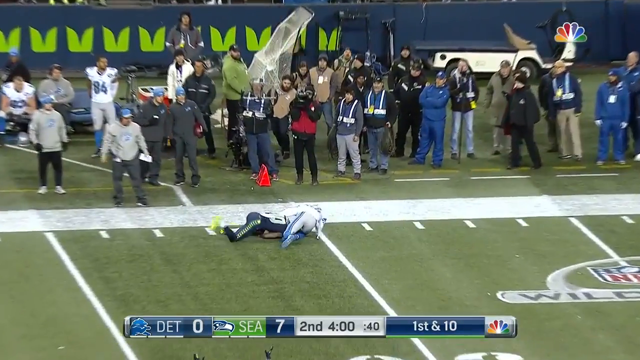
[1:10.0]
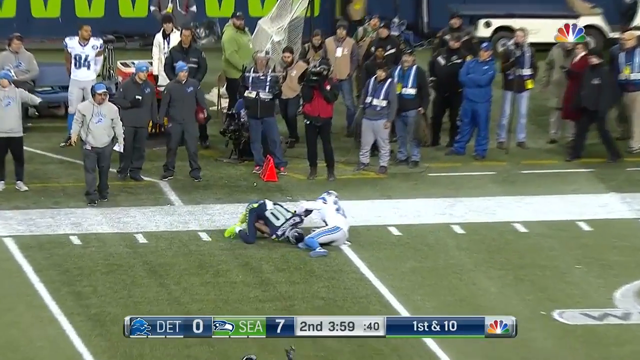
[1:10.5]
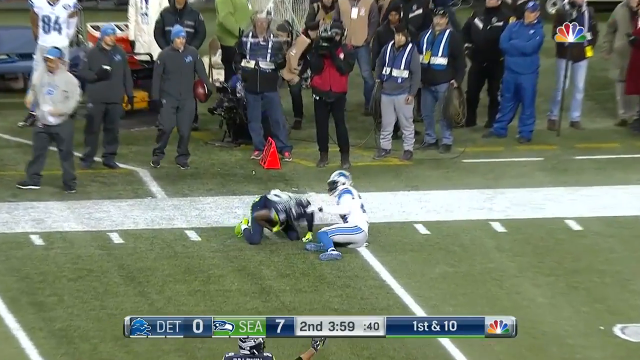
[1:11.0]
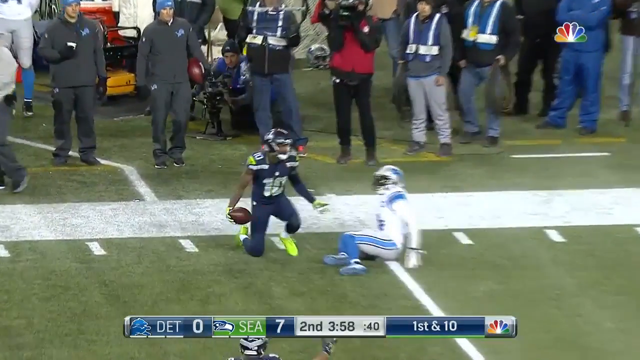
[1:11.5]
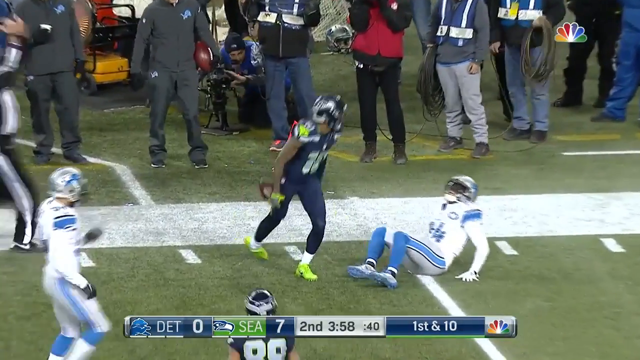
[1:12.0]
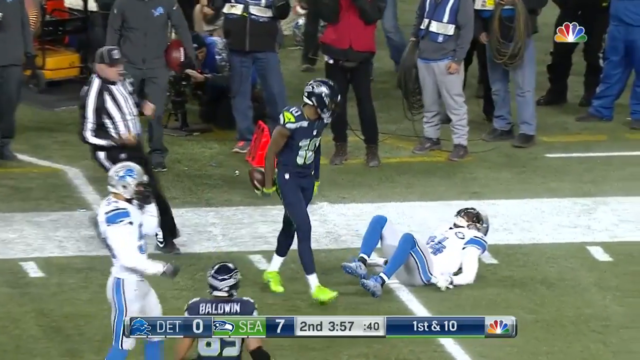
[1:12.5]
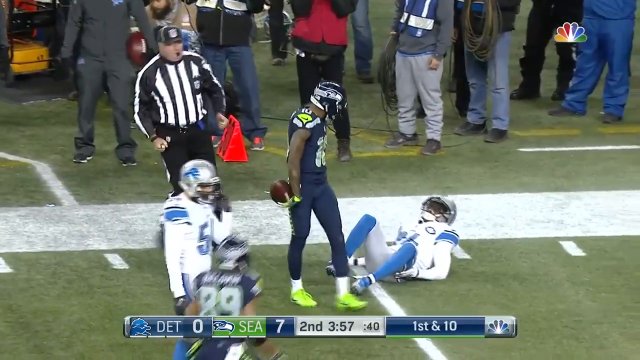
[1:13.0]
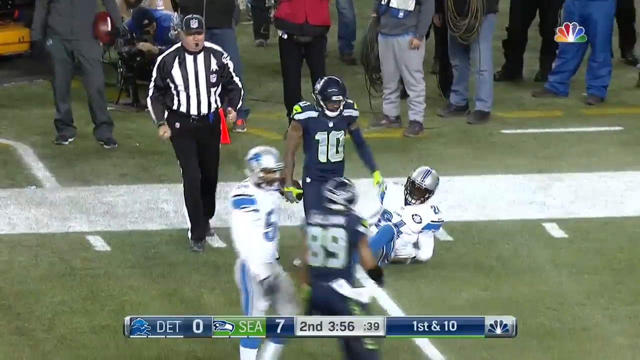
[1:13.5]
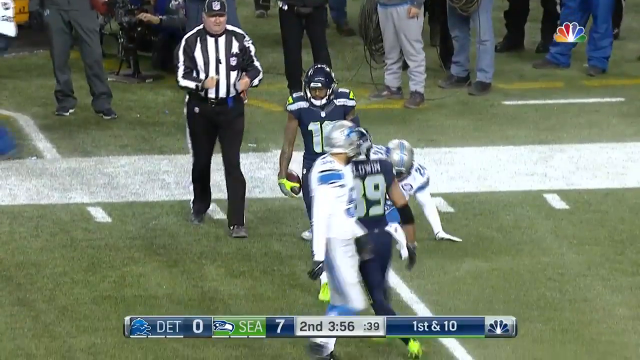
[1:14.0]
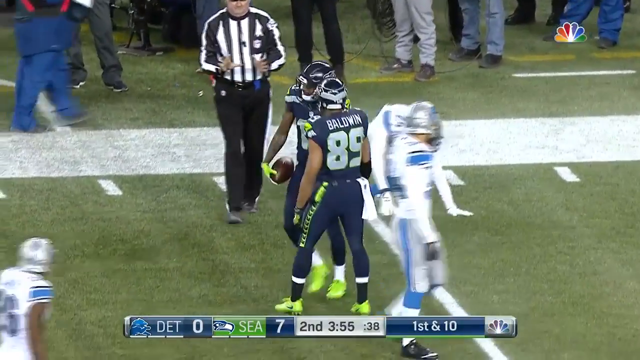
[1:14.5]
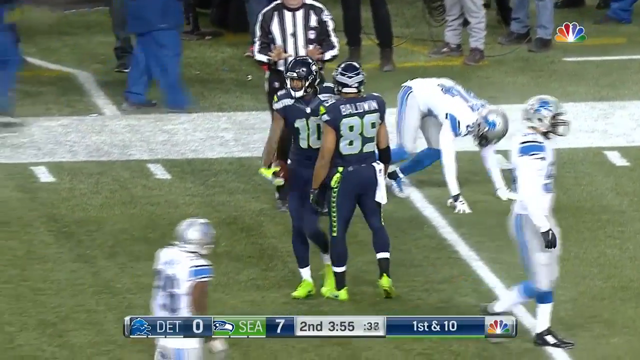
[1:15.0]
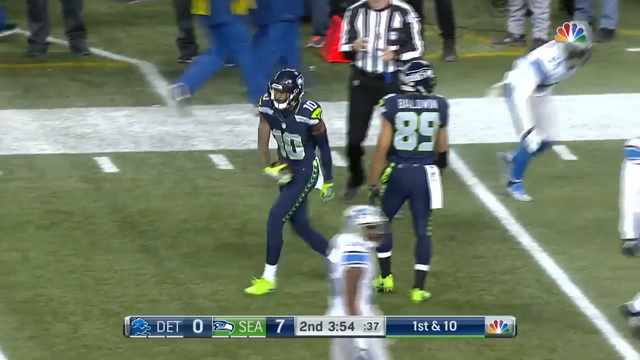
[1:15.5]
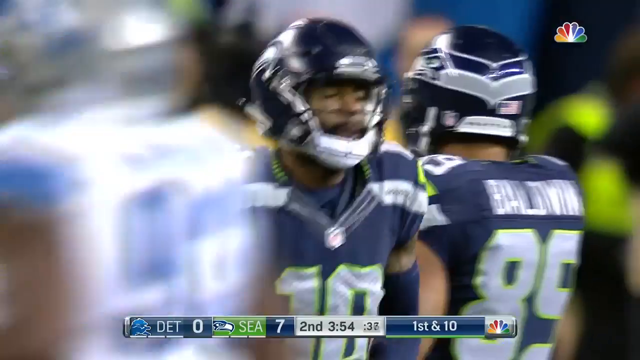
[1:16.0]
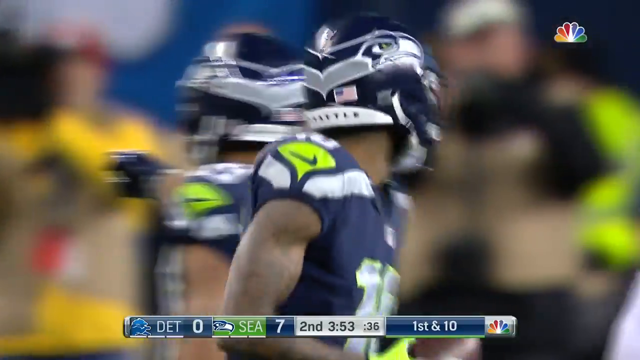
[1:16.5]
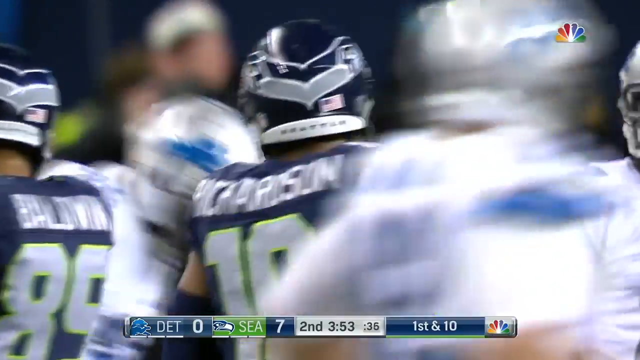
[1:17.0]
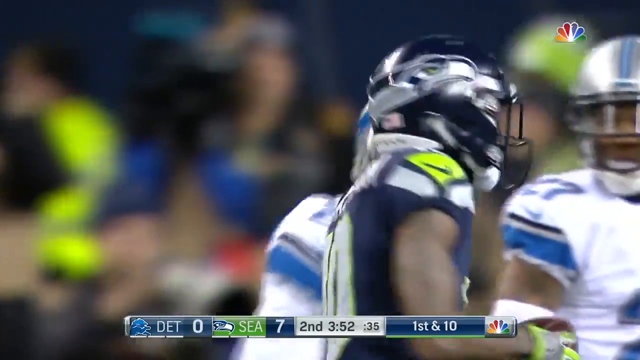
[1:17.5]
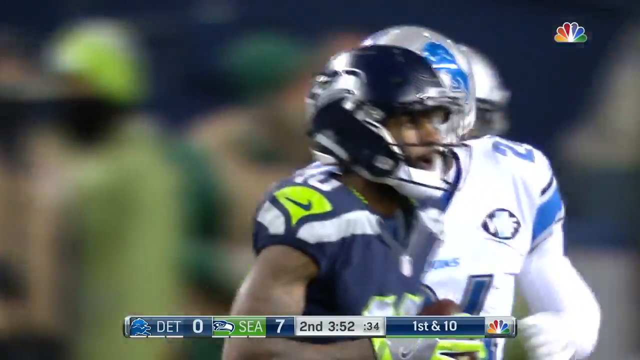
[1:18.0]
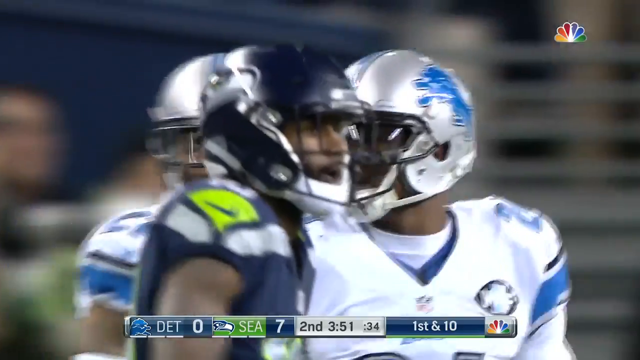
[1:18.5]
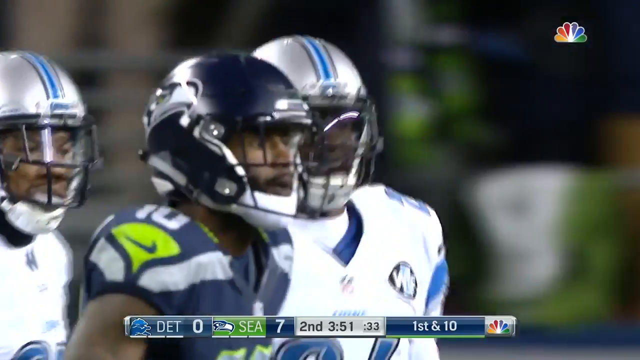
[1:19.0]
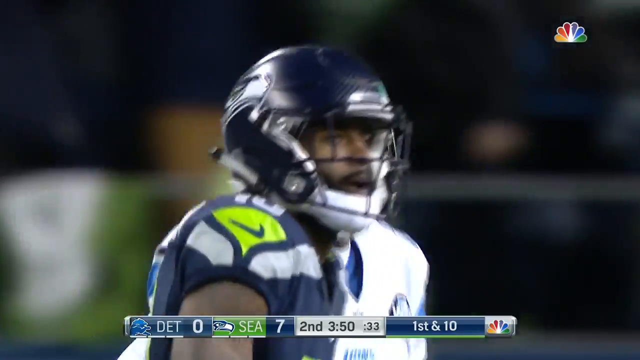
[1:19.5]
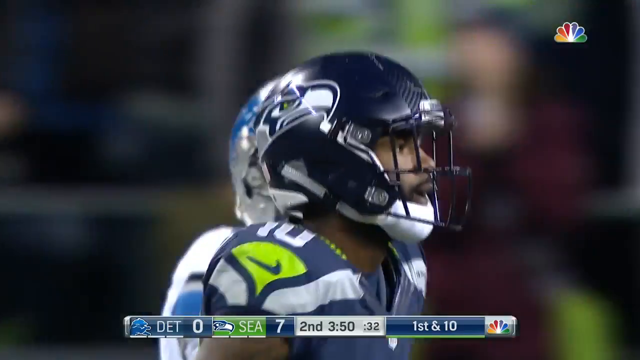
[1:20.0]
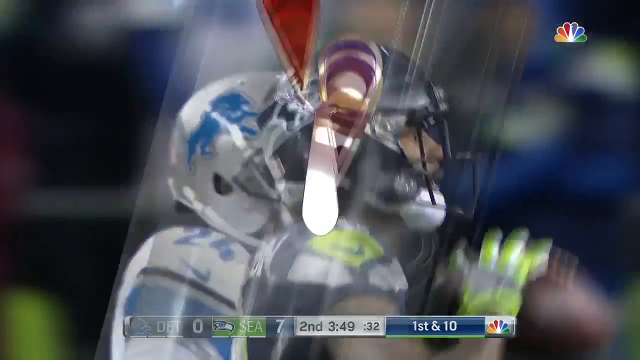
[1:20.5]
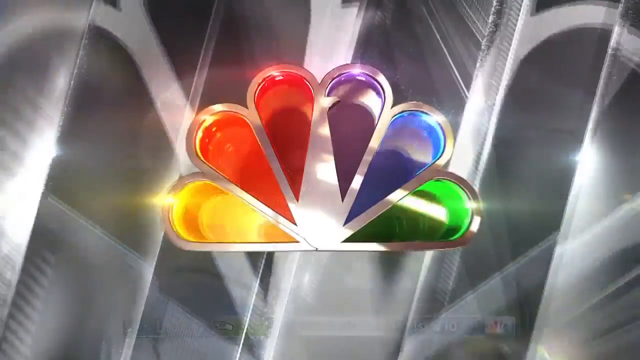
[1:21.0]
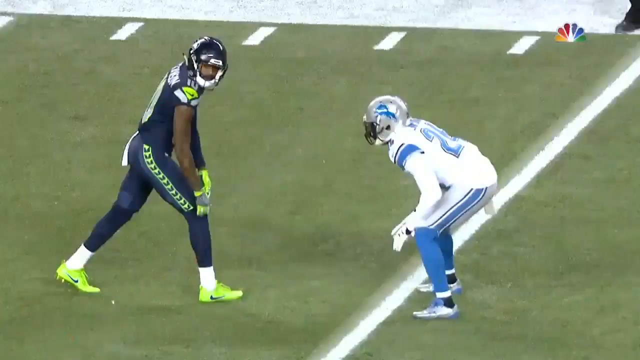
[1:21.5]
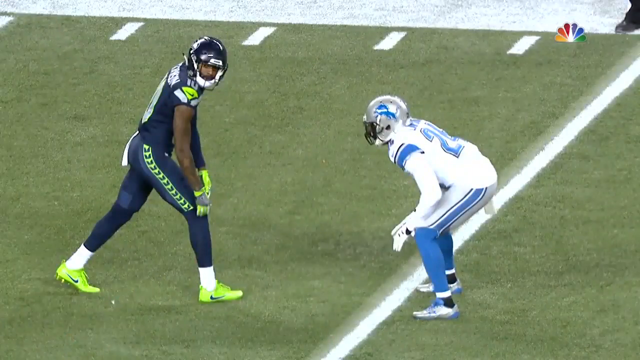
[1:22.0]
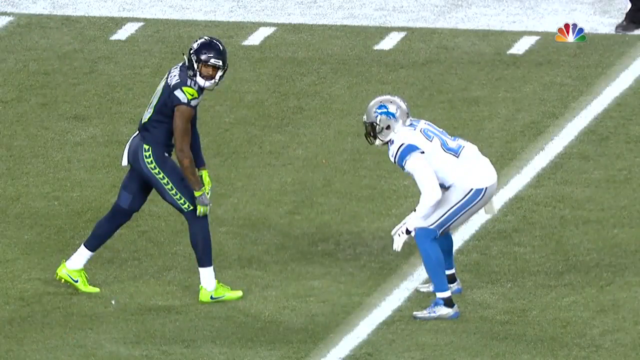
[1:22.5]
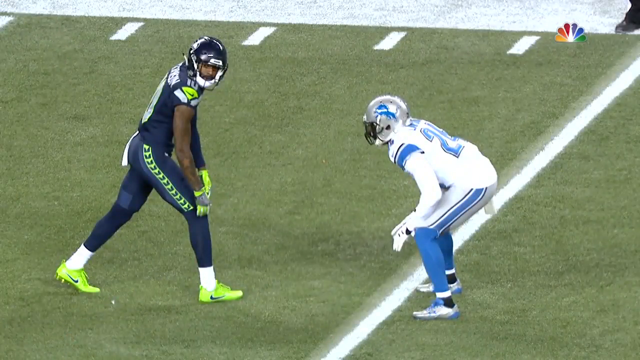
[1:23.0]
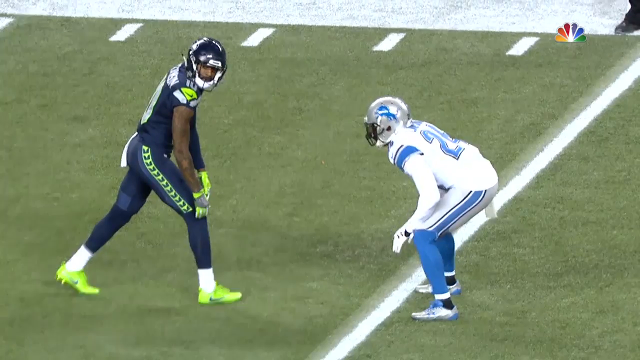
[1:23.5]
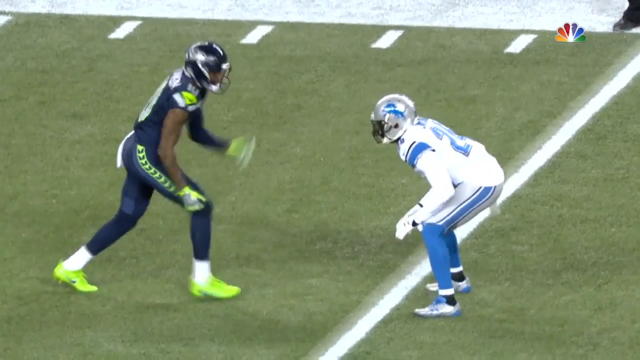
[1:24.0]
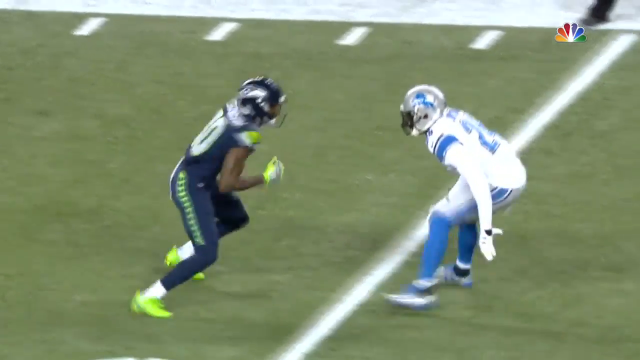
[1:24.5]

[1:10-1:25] Seahawks number 10 is on the ground after catching the pass, with the Lions player who fell down with him. He gets to his knees, stands up, and looks down at the Lions player on the ground, taunting him a little. Seahawks number 89, Baldwin, comes over to hype up his teammate. A close-up shows Richardson, number 10, with a couple of Lions players walking parallel to him. A close-up replay then begins with the two players at the line of scrimmage, Richardson on the left and the Lions player guarding him on the right; Richardson makes very quick motions and begins to run to the left.